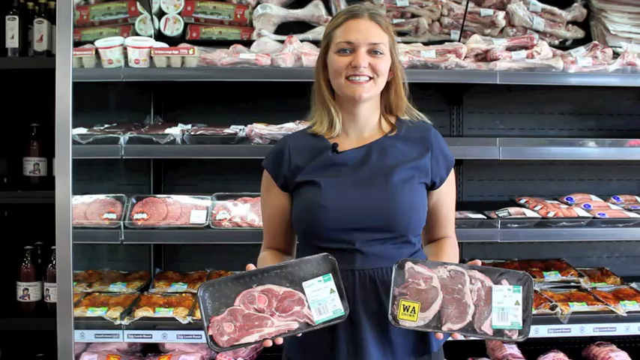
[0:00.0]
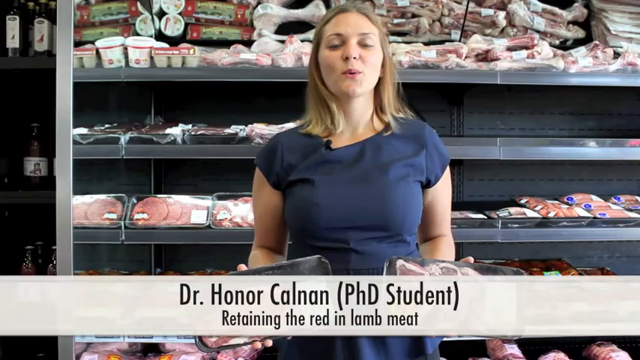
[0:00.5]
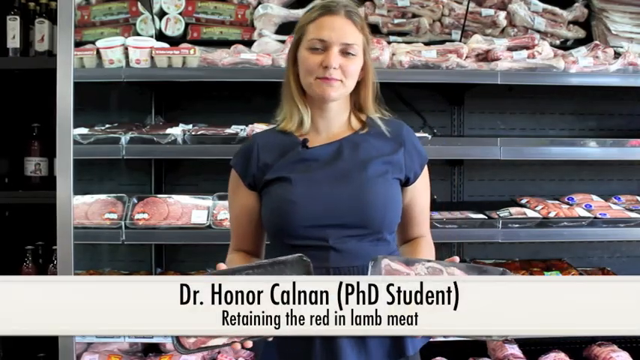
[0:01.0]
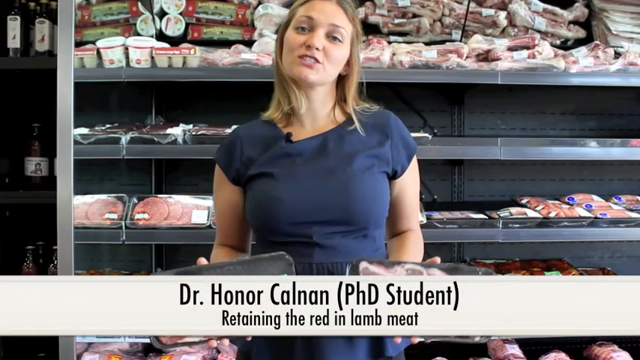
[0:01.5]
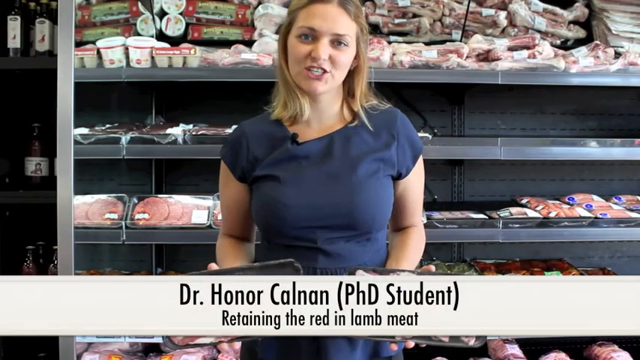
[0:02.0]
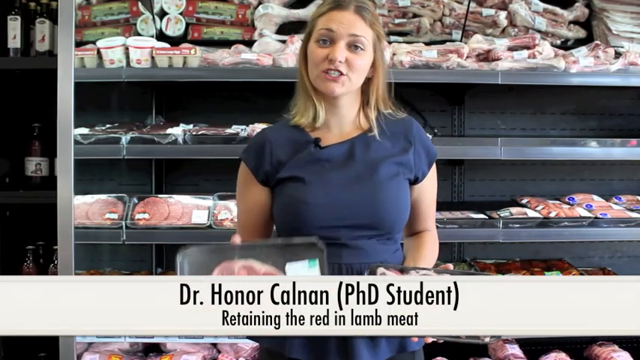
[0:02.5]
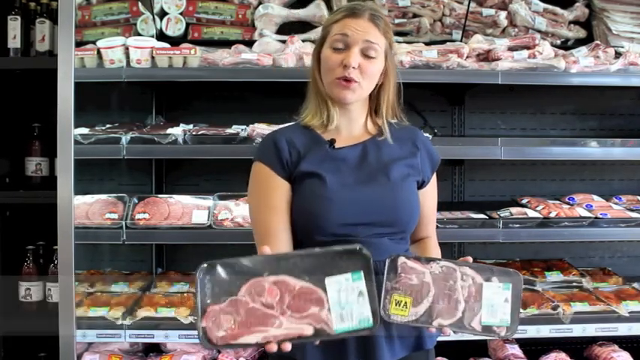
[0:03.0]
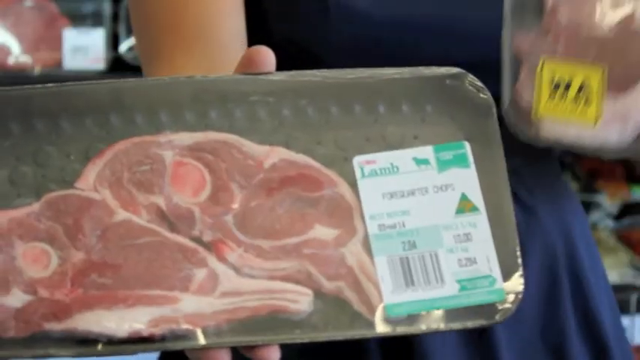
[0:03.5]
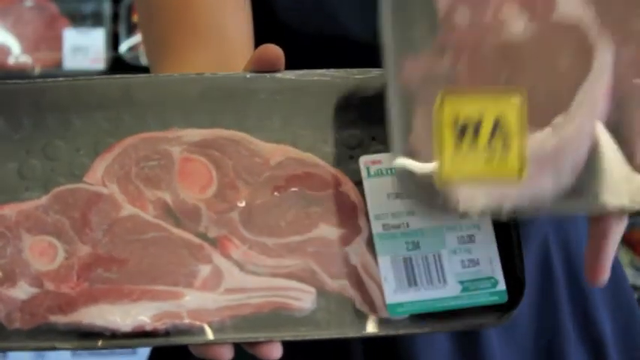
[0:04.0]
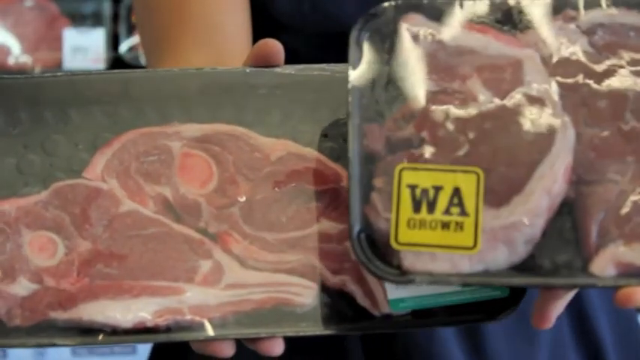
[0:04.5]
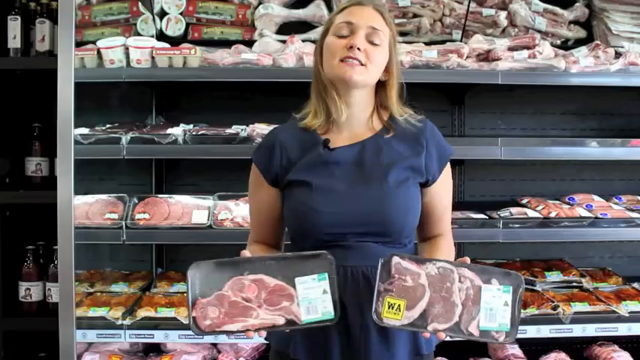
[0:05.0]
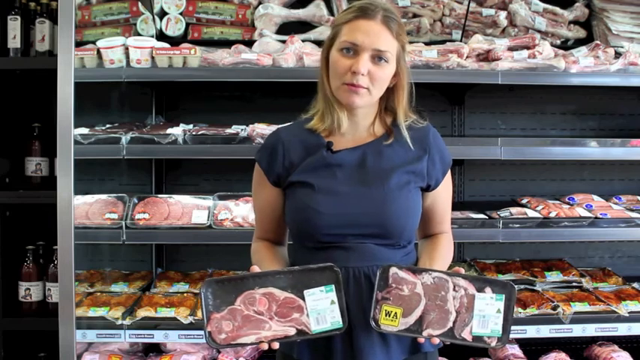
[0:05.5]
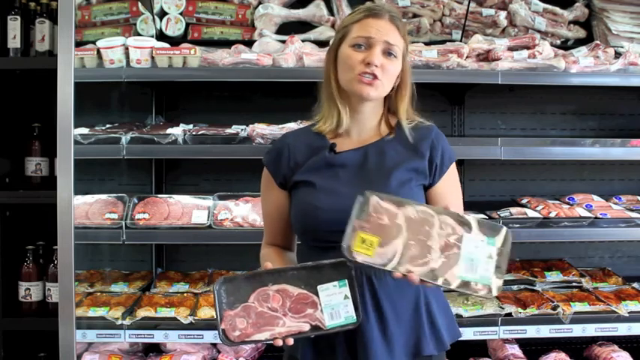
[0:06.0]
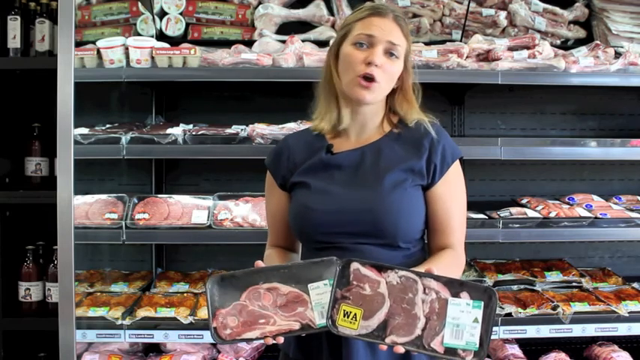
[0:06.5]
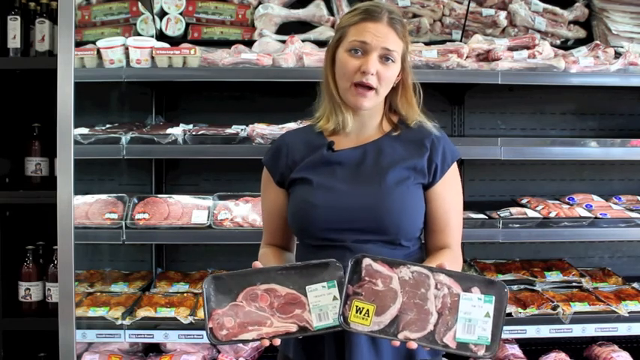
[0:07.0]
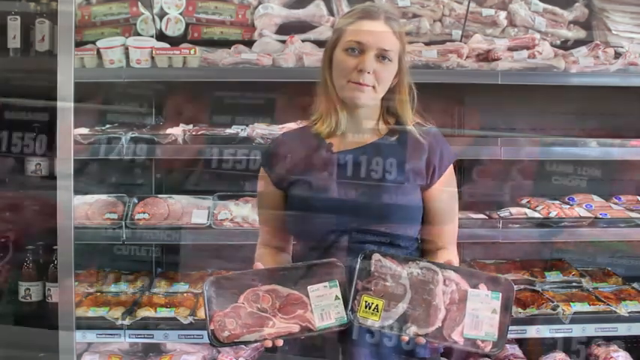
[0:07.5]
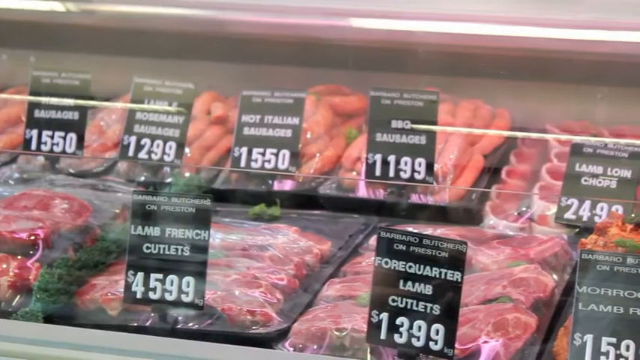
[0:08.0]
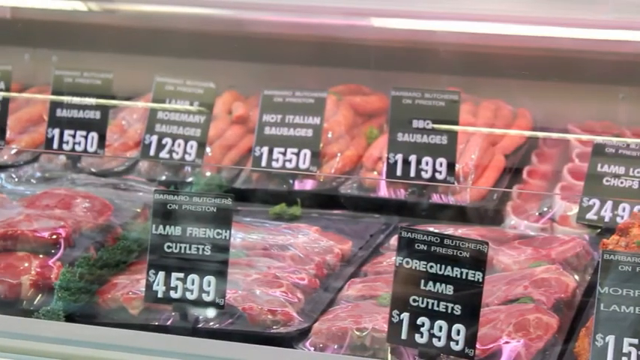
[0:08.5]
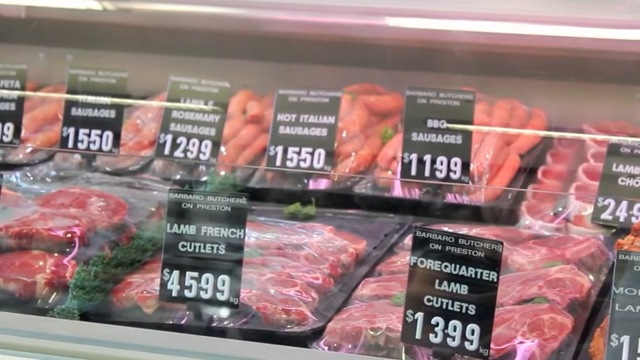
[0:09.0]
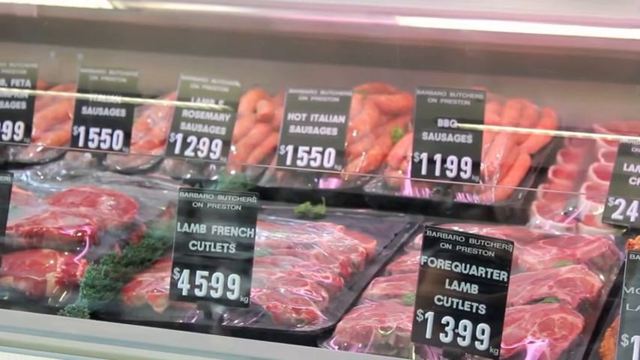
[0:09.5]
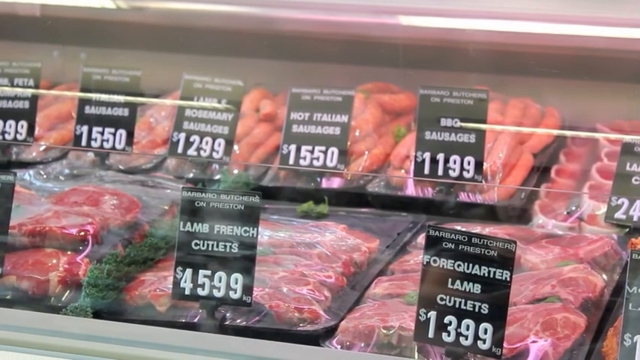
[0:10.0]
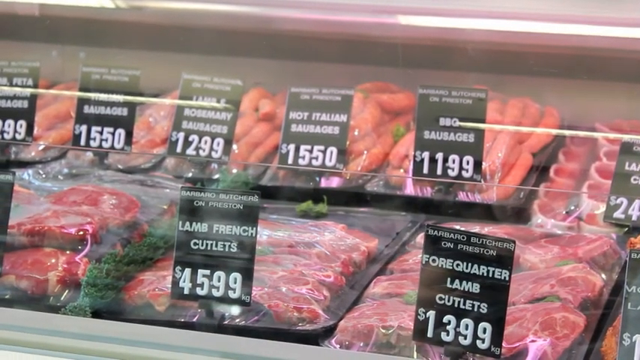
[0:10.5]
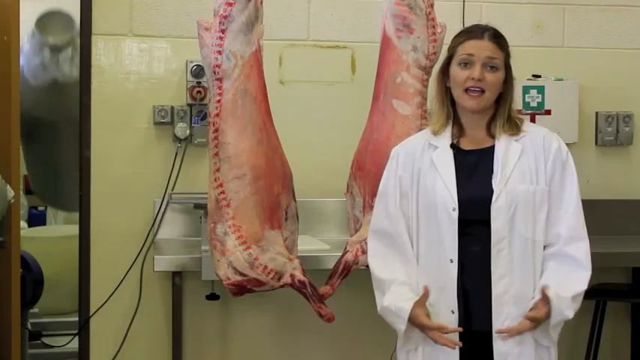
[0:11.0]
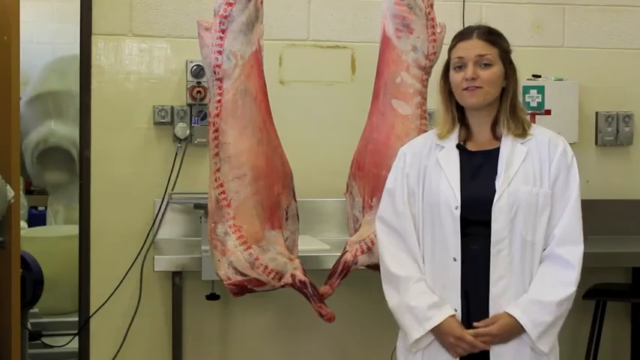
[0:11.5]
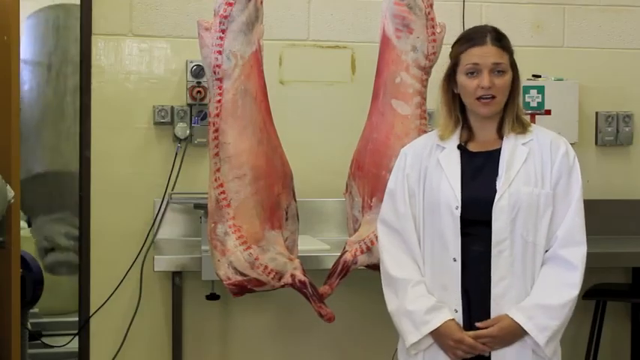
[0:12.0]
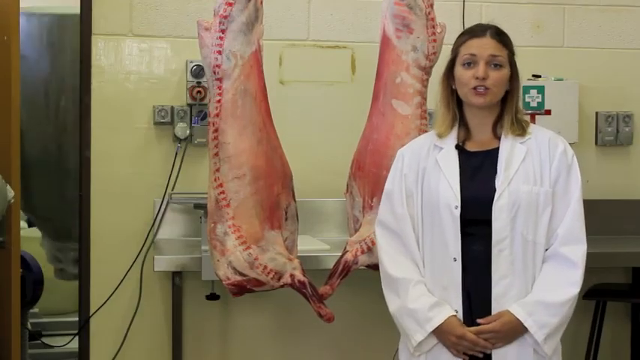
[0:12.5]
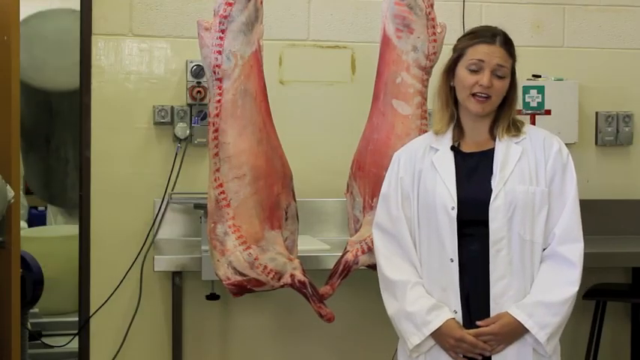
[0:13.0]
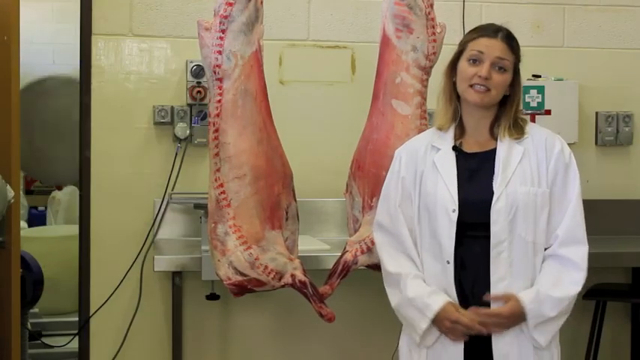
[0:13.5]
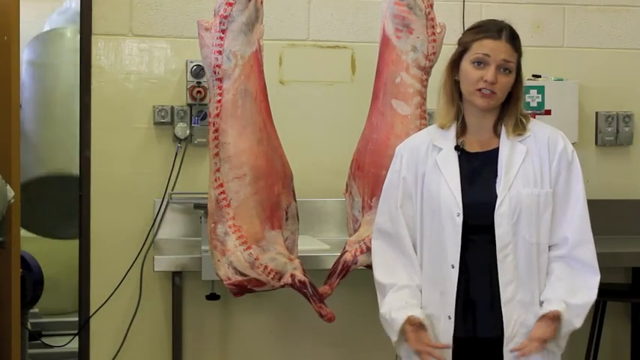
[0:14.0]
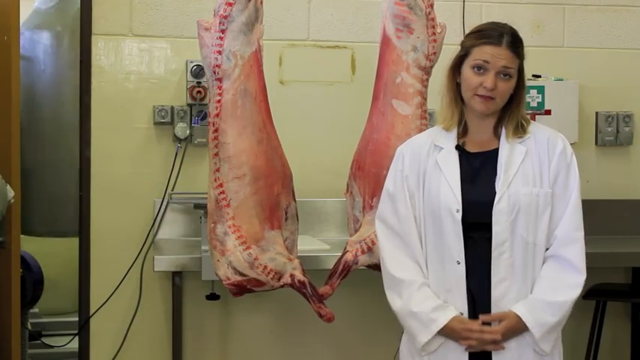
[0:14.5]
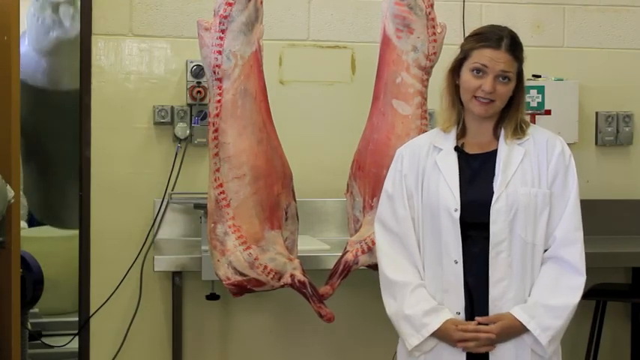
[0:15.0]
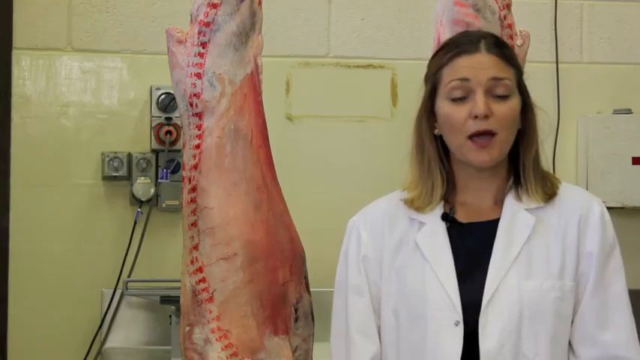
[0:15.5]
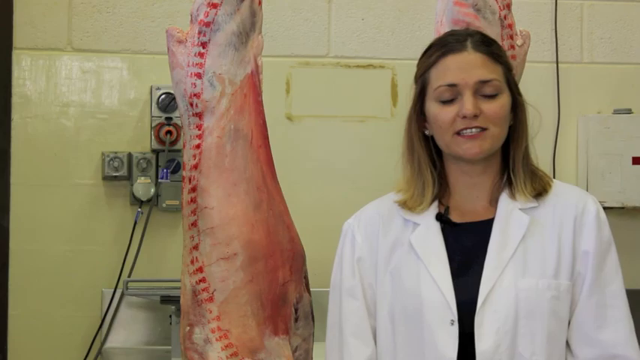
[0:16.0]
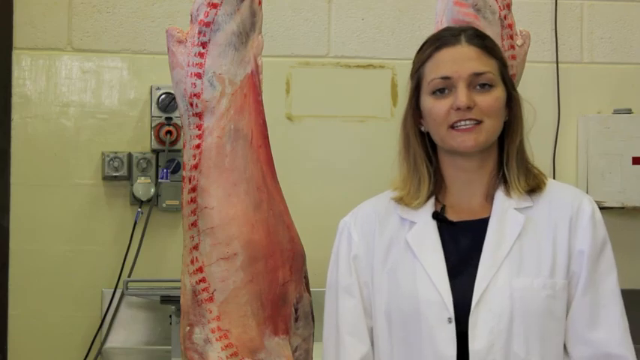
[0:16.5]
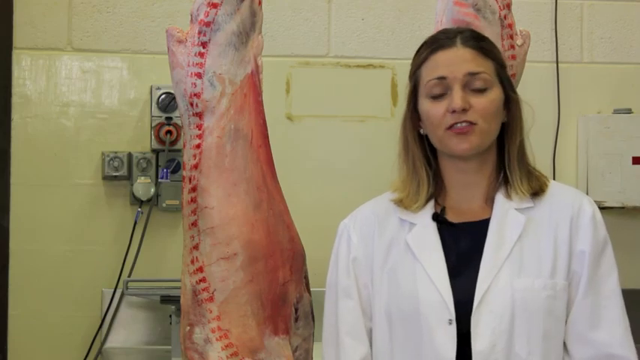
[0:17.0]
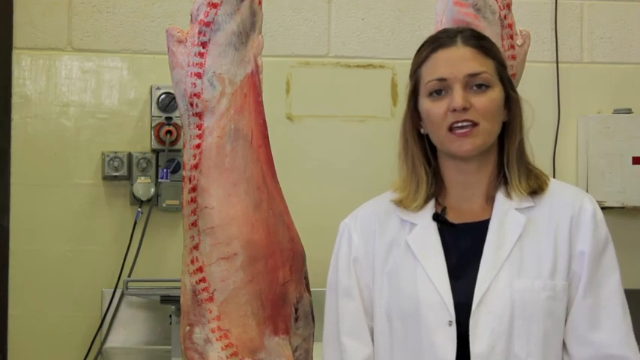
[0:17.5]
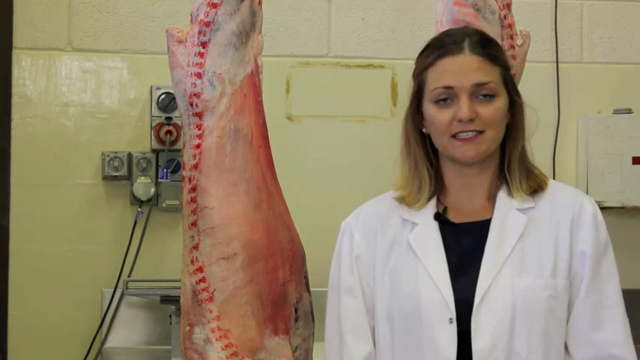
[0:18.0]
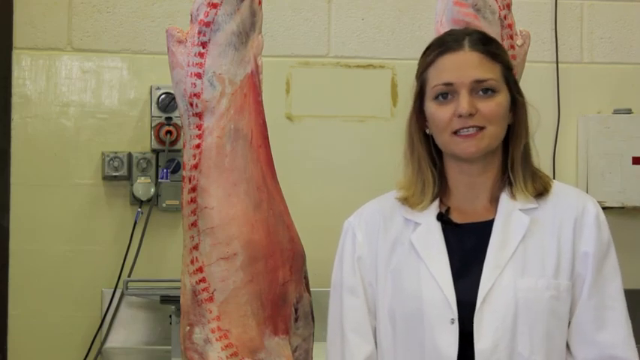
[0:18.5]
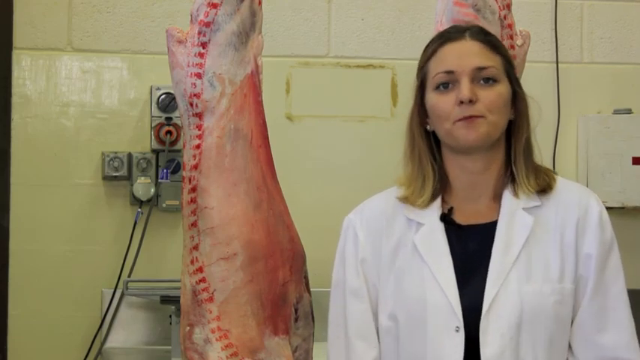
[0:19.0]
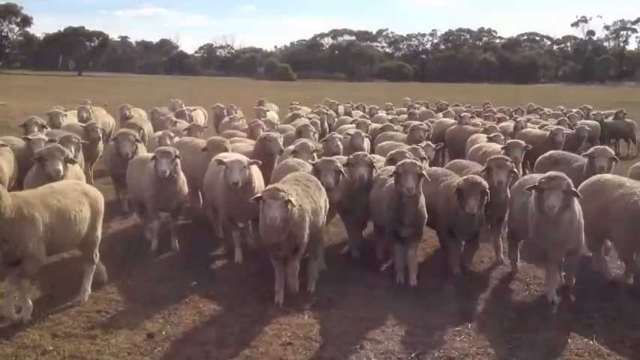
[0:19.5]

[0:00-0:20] The video opens in what looks like the meat department of a grocery store, where one person, Dr. Honor Calnan, a PhD student, holds two different packages of meat and is apparently discussing the different cuts of lamb. The camera pans to some of the available cuts of lamb, such as the fore quarter lamb cutlet and the lamb french cutlet. She then stands in another location that looks like the back of a grocery store or butcher shop, or perhaps a facility on a university campus focused on killing animals for food. She wears a white lab coat, and hanging behind her is what appears to be a lamb that has been killed, skinned and split in half, apparently waiting to be portioned out and sold.